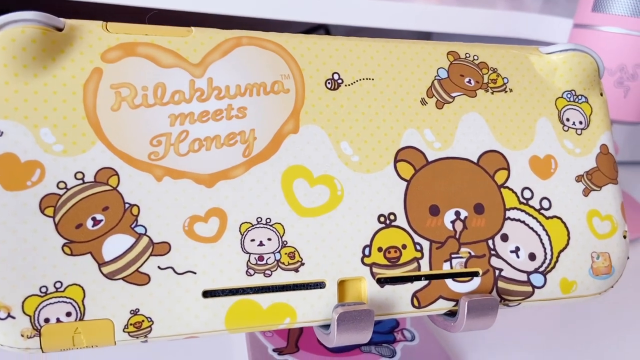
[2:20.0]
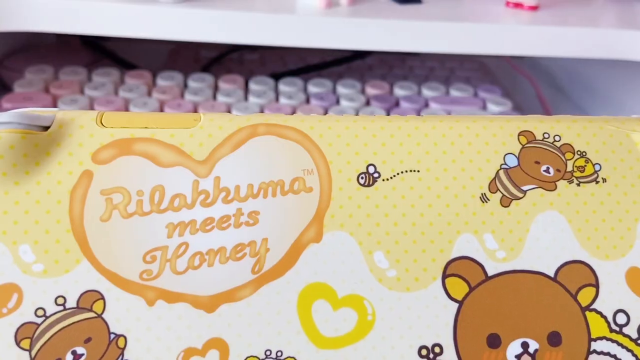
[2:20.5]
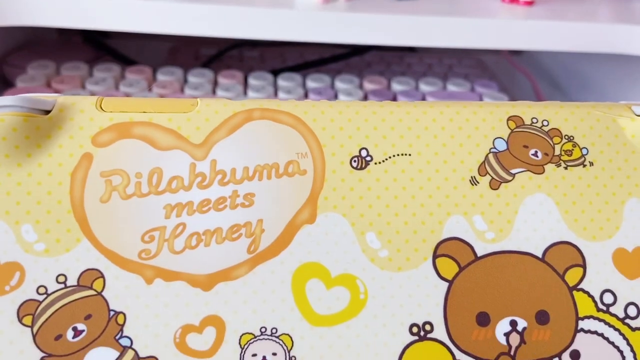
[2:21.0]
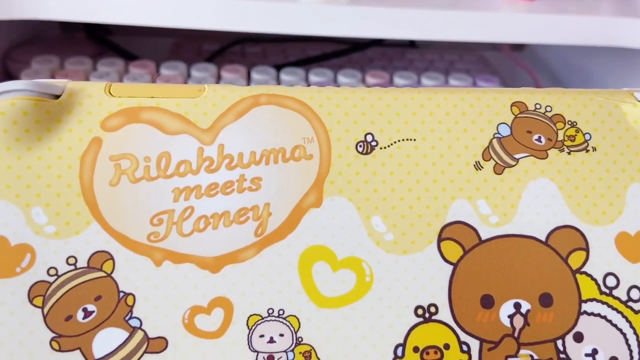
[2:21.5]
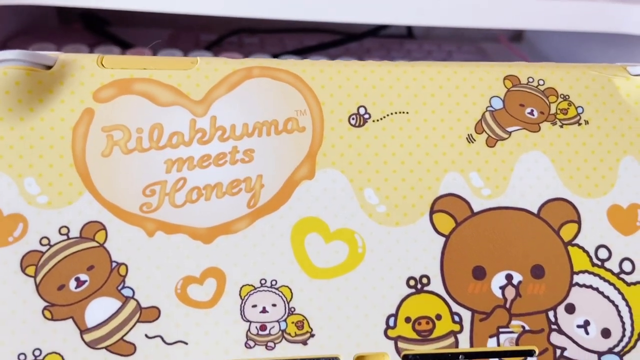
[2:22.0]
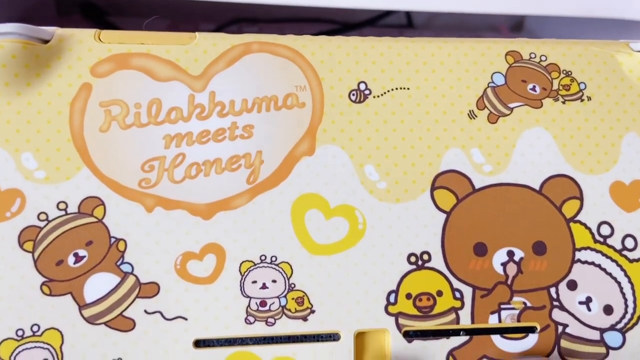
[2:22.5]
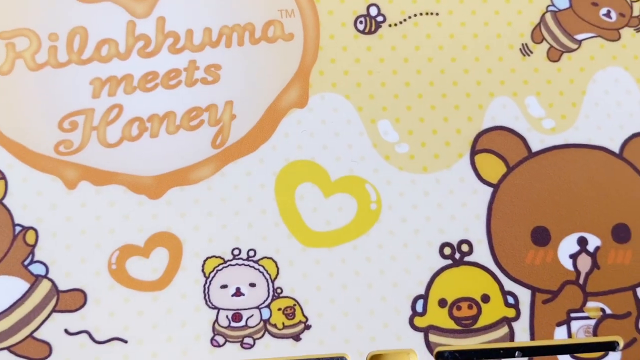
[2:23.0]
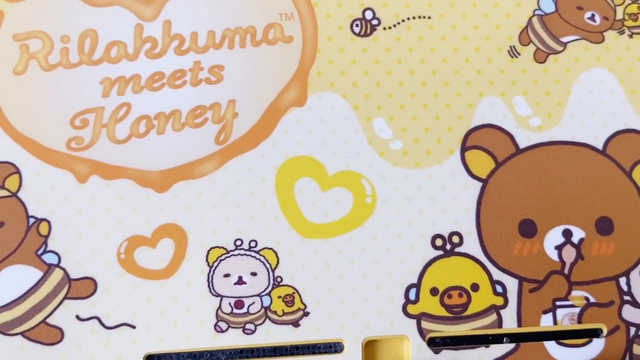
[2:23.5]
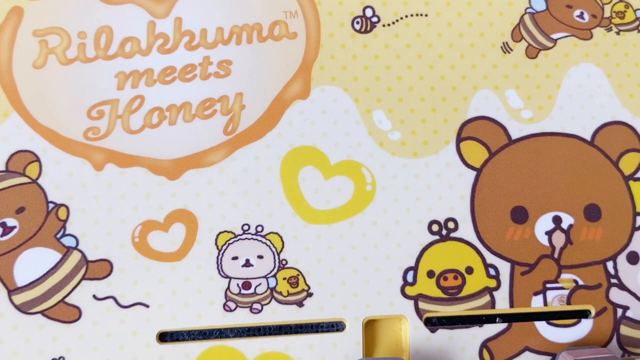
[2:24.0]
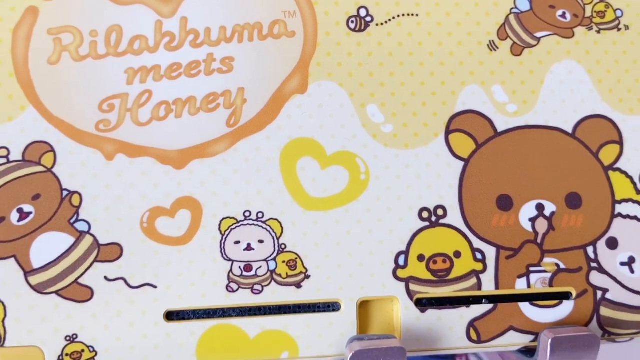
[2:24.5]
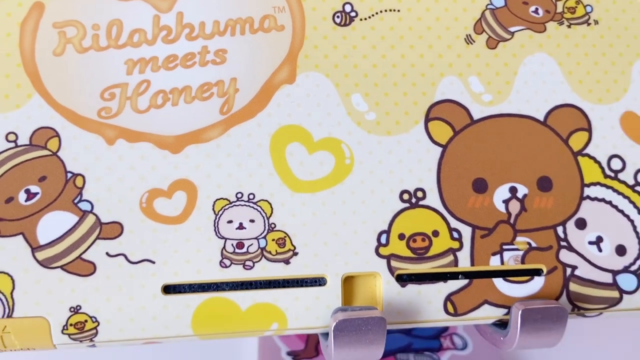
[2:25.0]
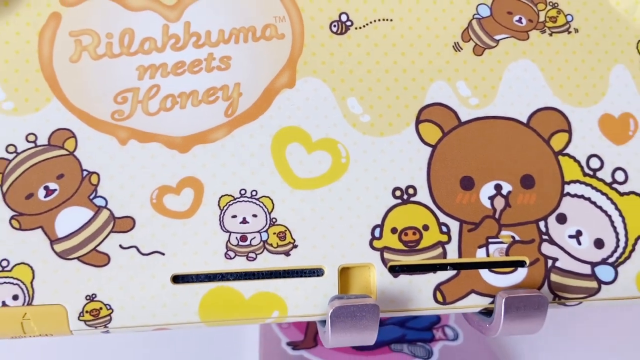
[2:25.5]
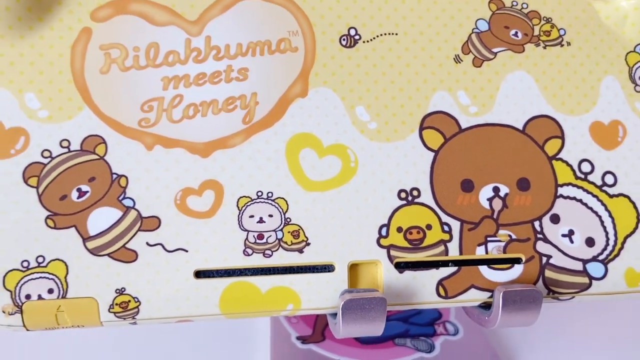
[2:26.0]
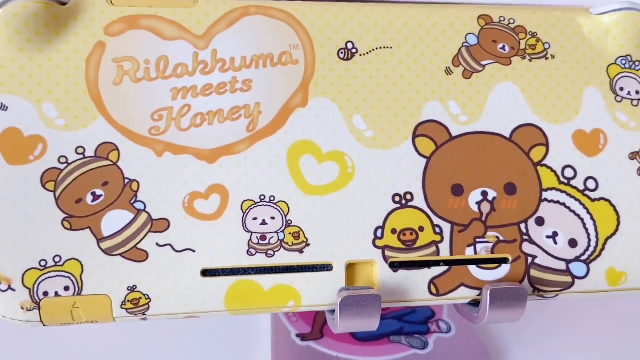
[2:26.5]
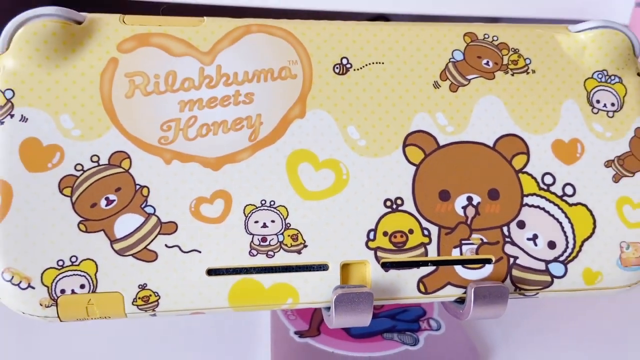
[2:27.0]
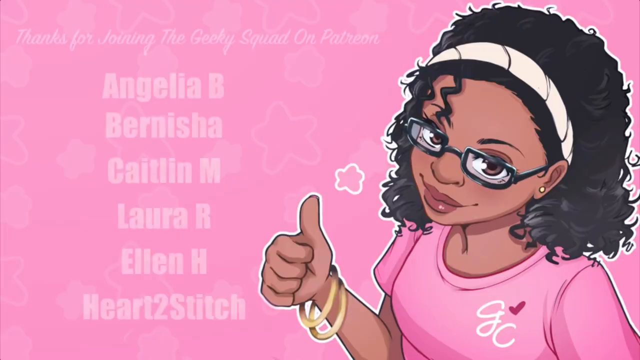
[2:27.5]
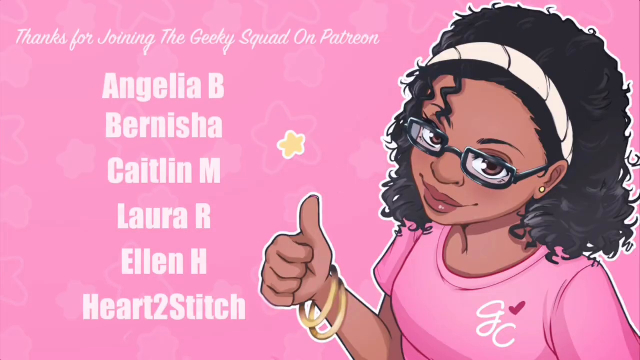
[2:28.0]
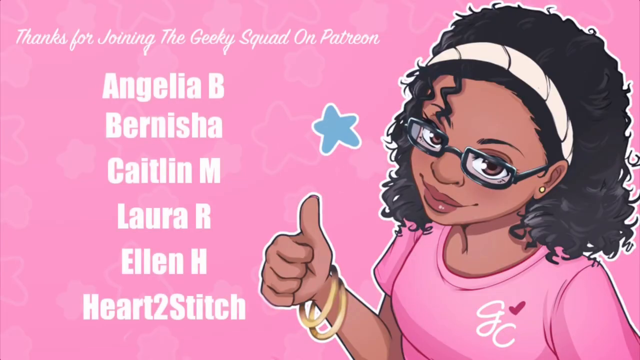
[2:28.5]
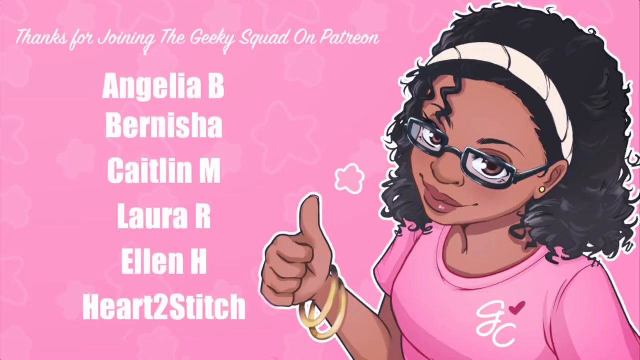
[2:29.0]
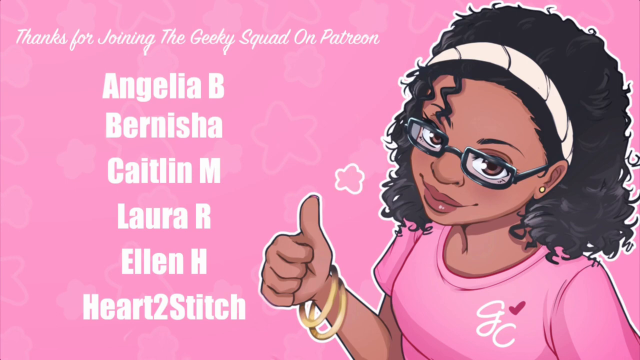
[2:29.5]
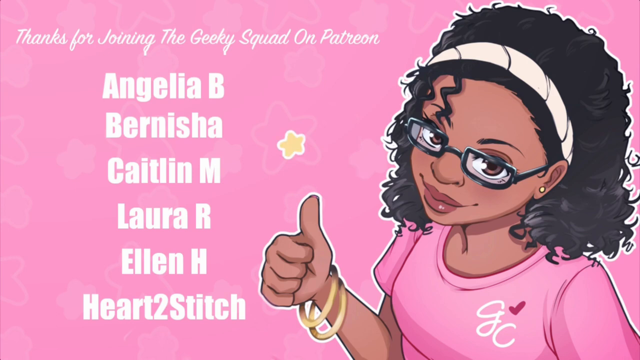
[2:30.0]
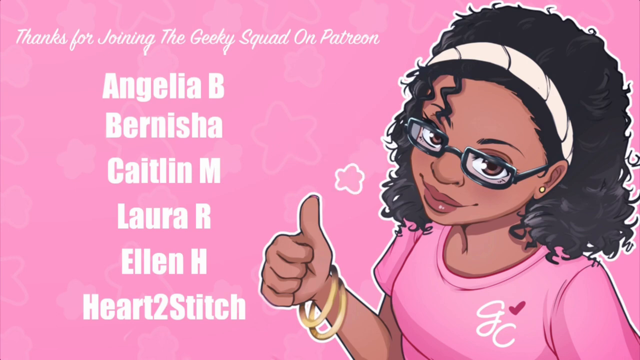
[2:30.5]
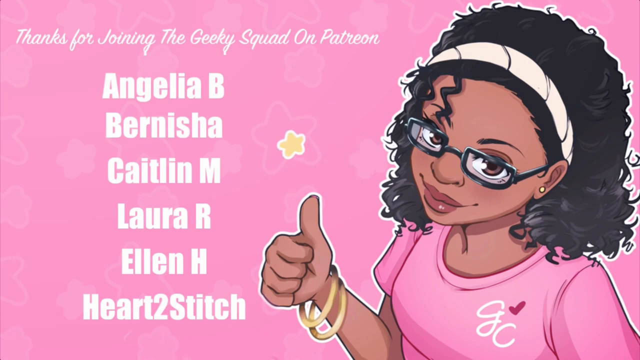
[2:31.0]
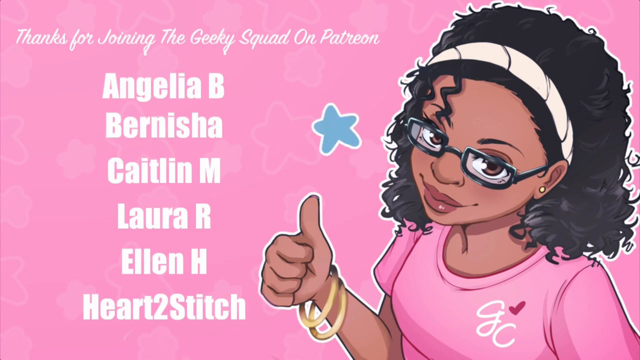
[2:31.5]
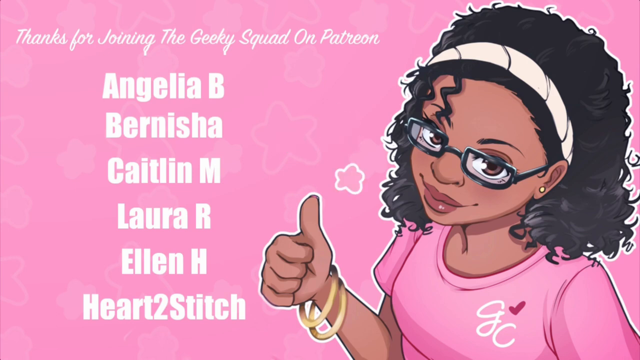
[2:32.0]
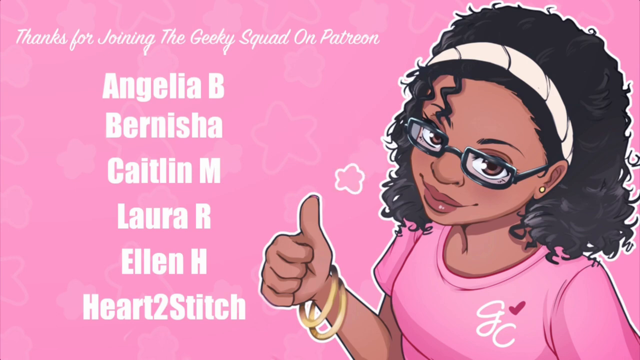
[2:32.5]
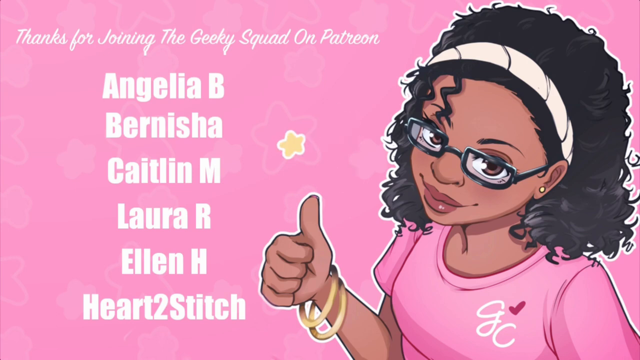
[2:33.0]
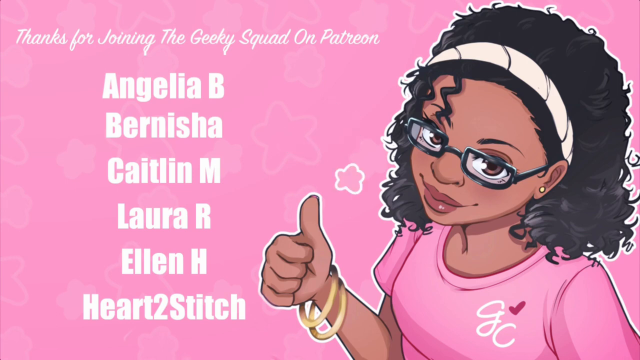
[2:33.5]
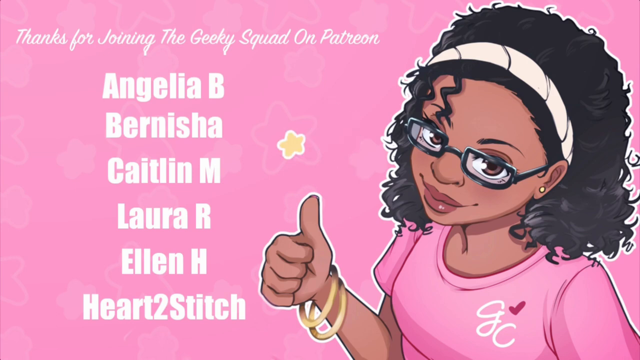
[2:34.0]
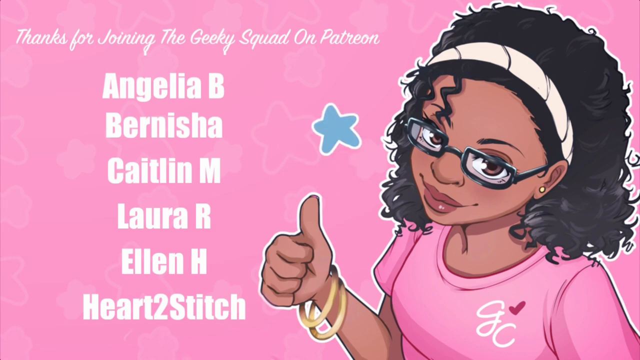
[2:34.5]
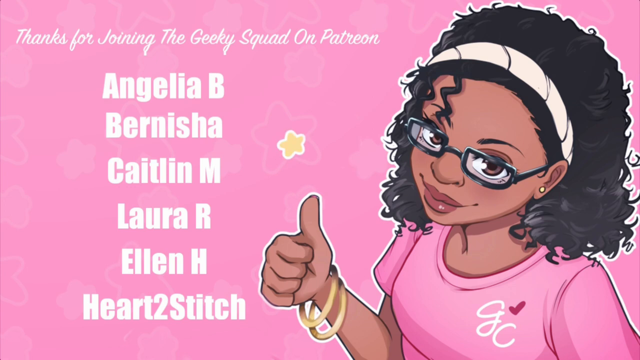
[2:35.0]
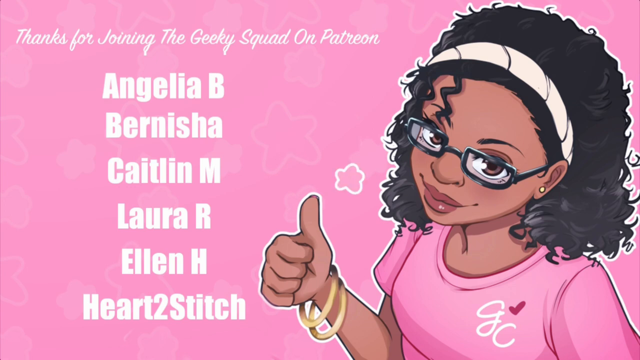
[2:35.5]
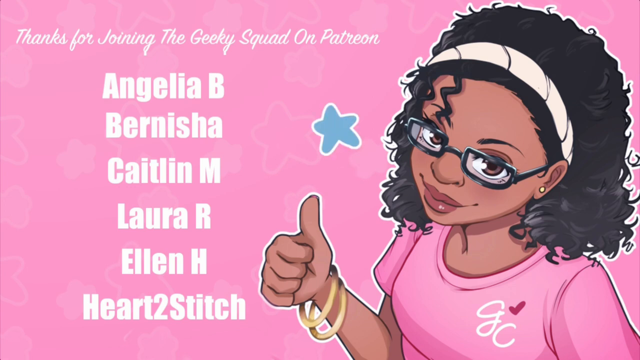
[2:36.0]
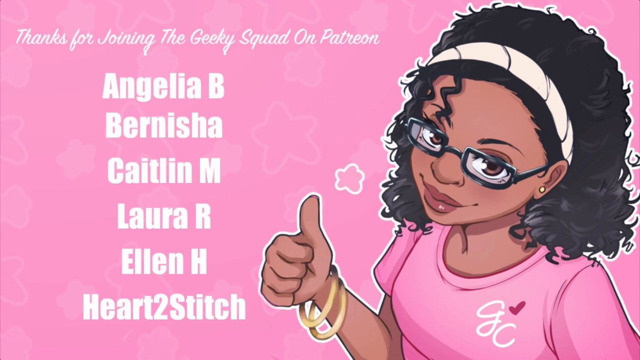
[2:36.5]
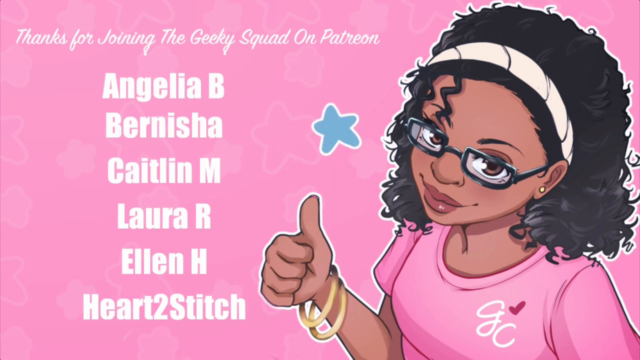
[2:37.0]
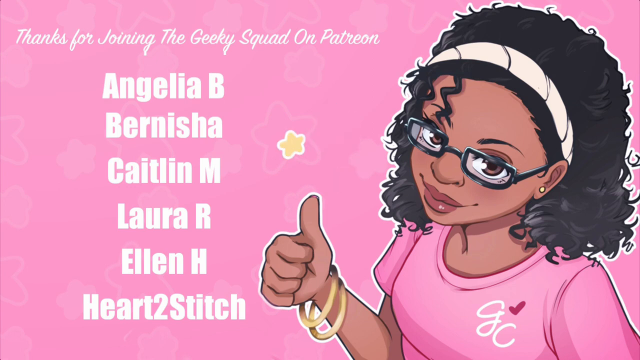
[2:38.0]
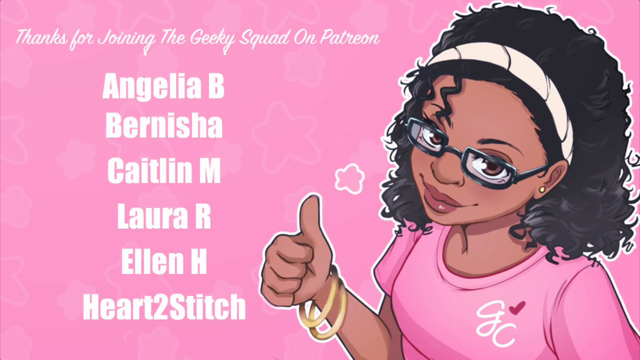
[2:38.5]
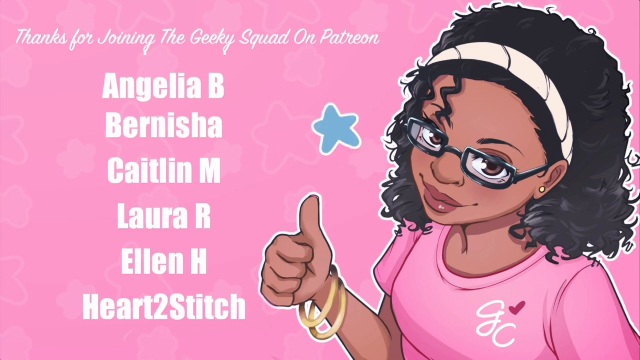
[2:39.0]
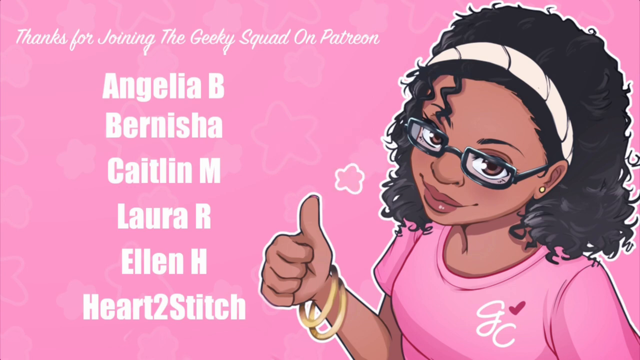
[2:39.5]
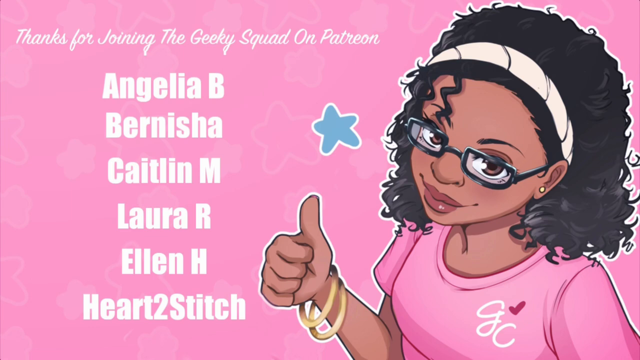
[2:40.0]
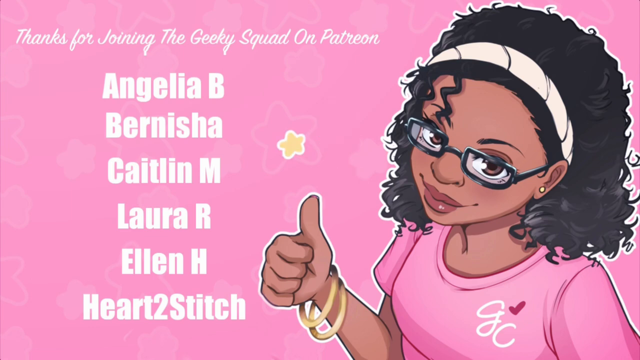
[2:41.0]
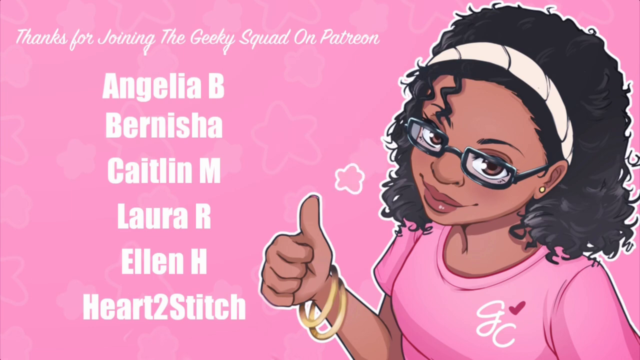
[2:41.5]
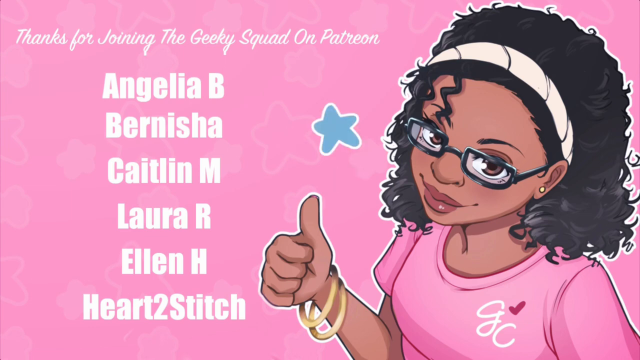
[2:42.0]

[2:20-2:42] Very close-up shots show a yellow object positioned on a sort of display, whose bases are visible at the bottom of the screen. The object has several very colorful illustrations, some depicting very colorful animals and others yellow and orange hearts. In the upper left corner of the frame there are some lines of orange text on a white background, enclosed in what appears to be an orange heart. Finally, an image with a pink background appears, with some lines of white text in the upper left corner and, in the upper right corner, an illustration of a girl giving a thumbs up. The girl has quite long, wavy black hair, wears glasses with a rather thick dark frame and a yellow earring, and wears a pink short-sleeved shirt.